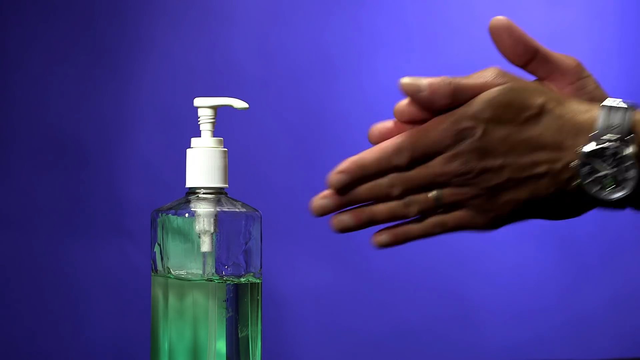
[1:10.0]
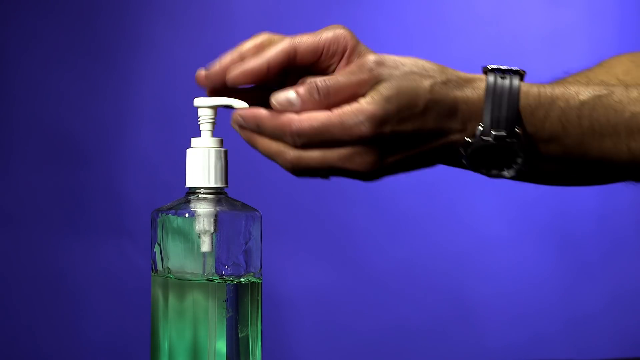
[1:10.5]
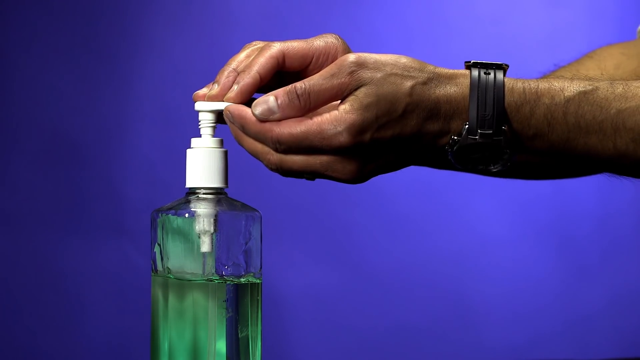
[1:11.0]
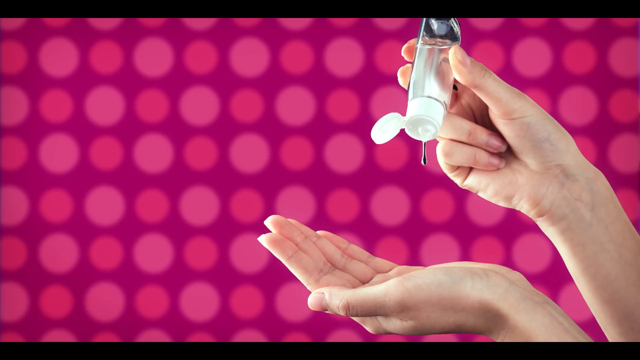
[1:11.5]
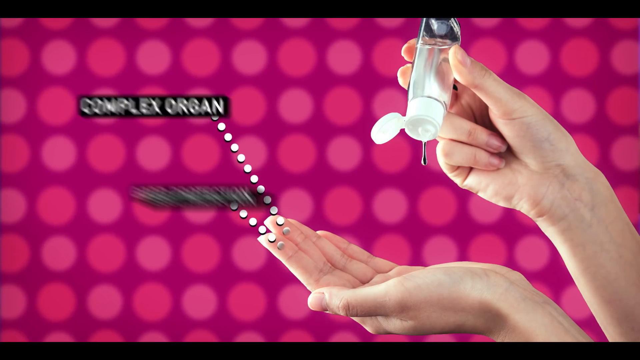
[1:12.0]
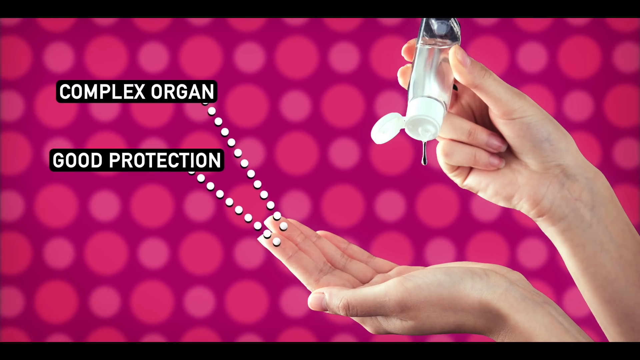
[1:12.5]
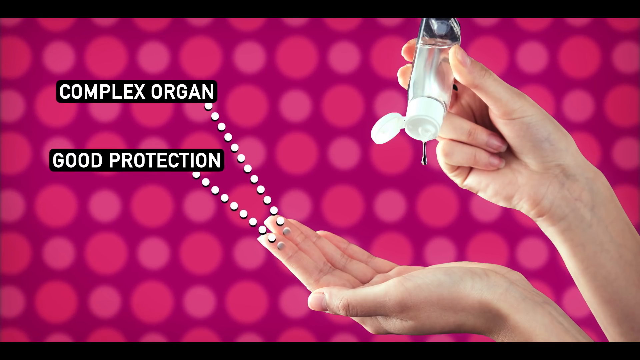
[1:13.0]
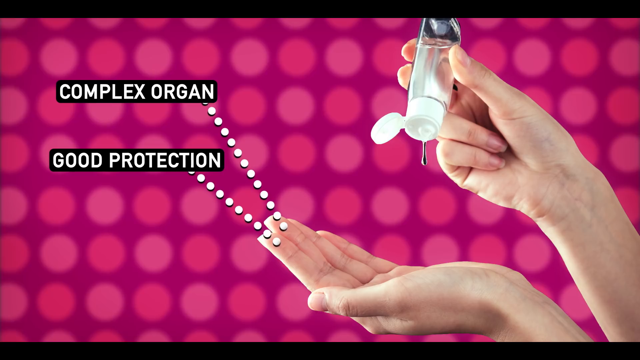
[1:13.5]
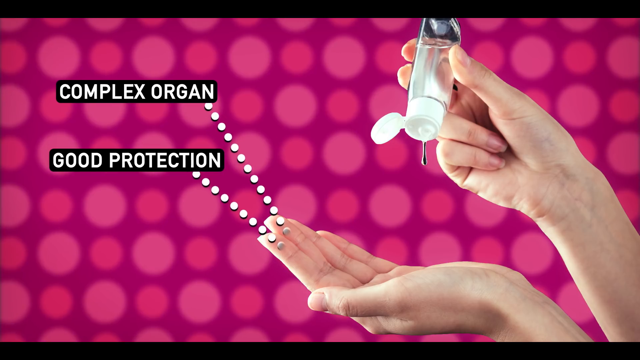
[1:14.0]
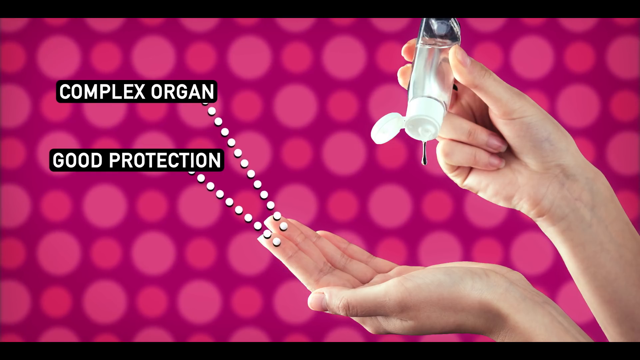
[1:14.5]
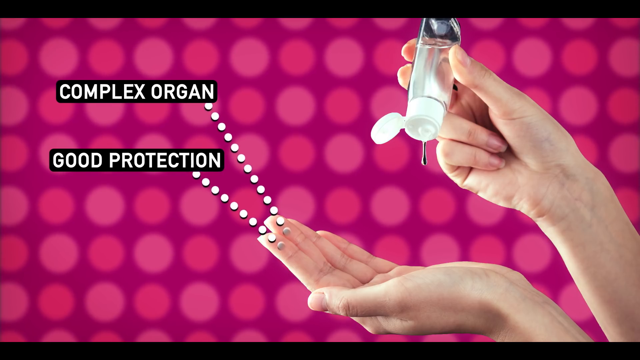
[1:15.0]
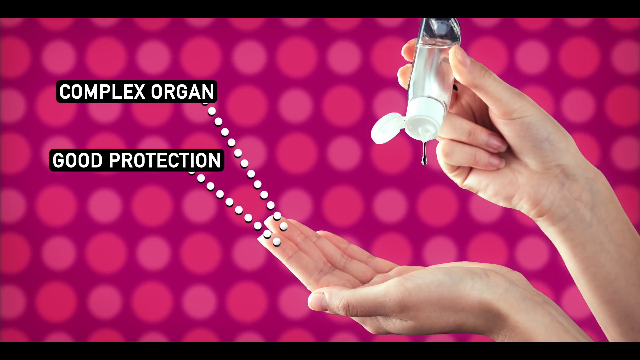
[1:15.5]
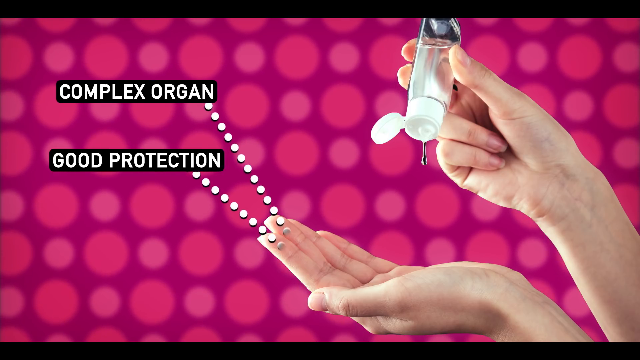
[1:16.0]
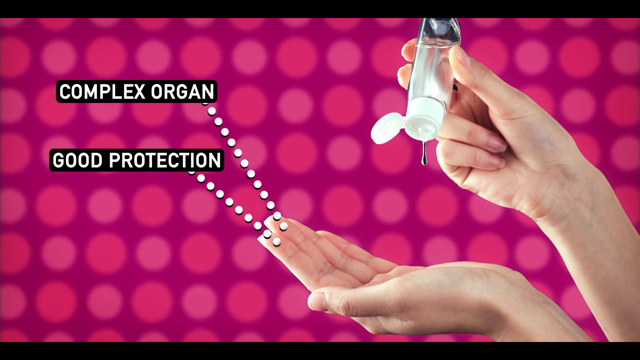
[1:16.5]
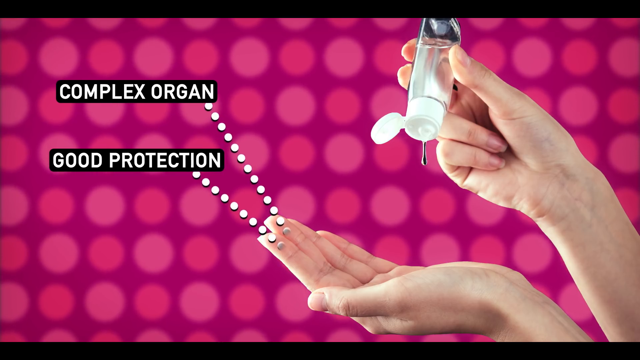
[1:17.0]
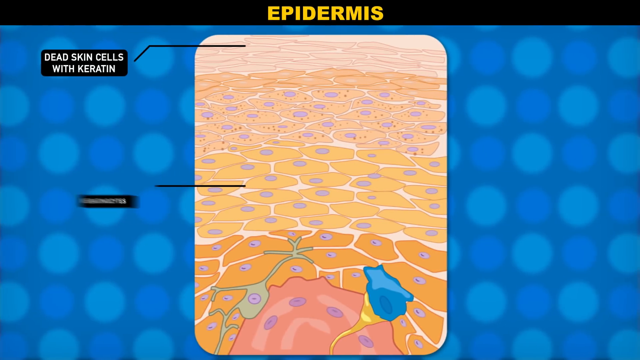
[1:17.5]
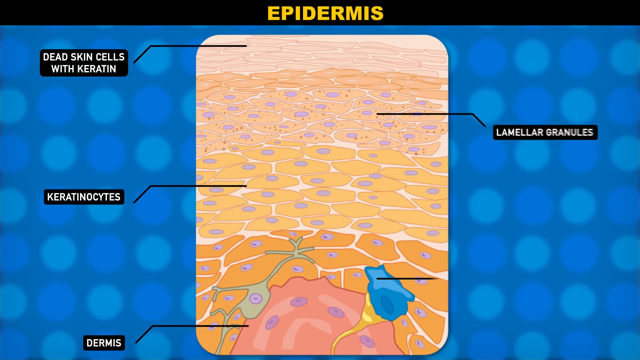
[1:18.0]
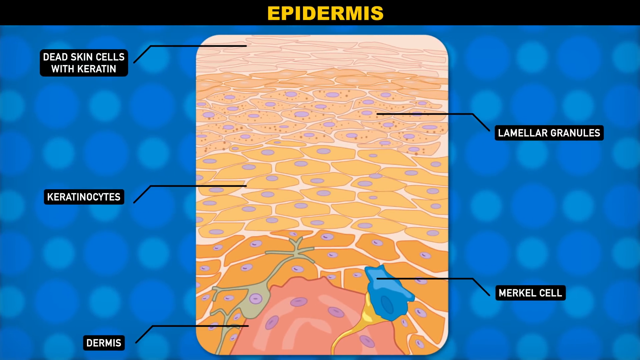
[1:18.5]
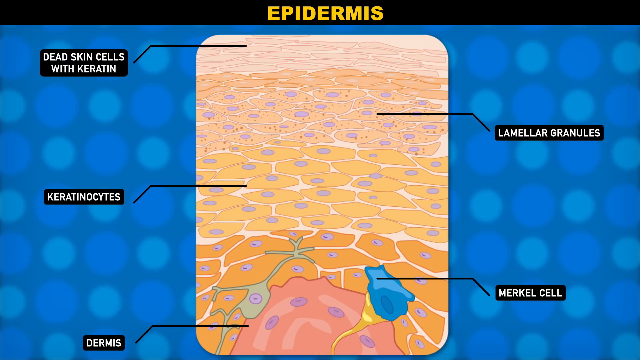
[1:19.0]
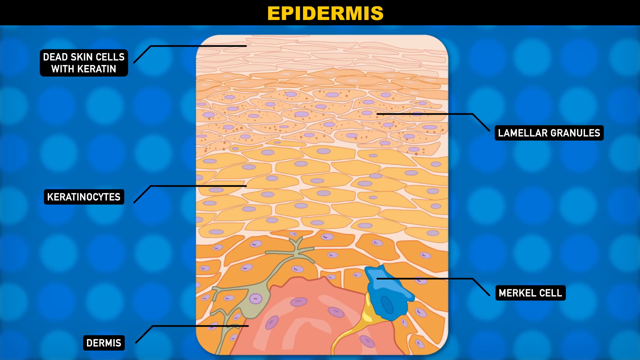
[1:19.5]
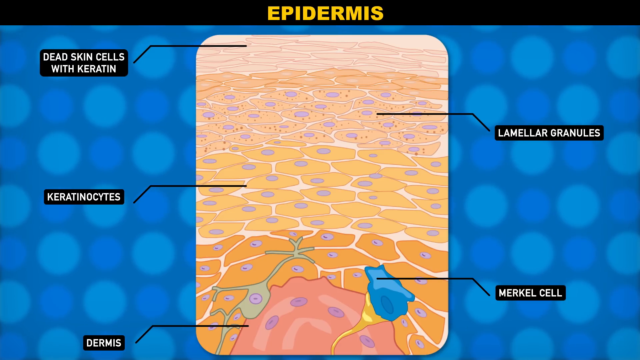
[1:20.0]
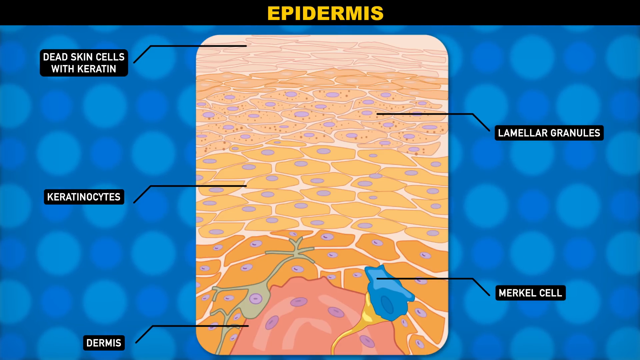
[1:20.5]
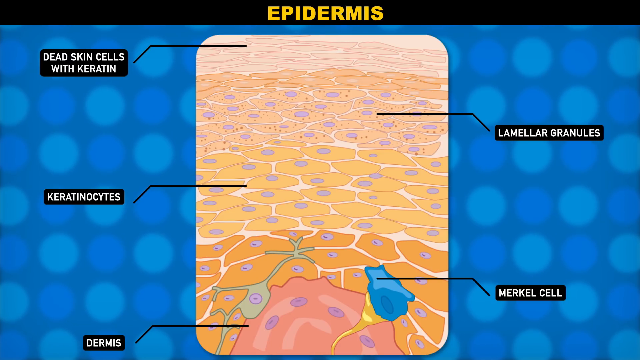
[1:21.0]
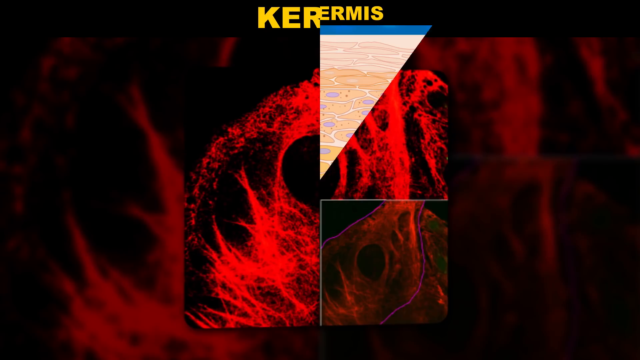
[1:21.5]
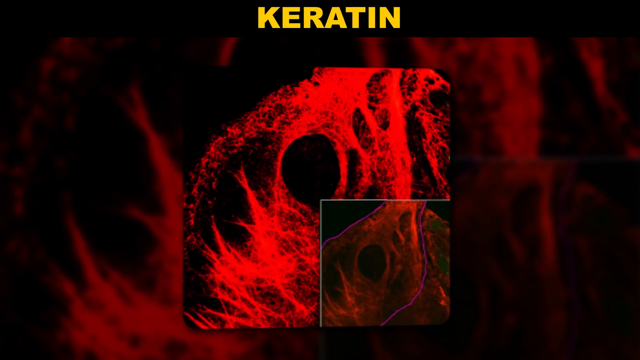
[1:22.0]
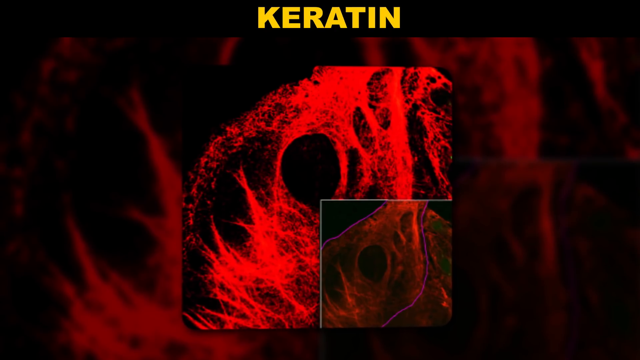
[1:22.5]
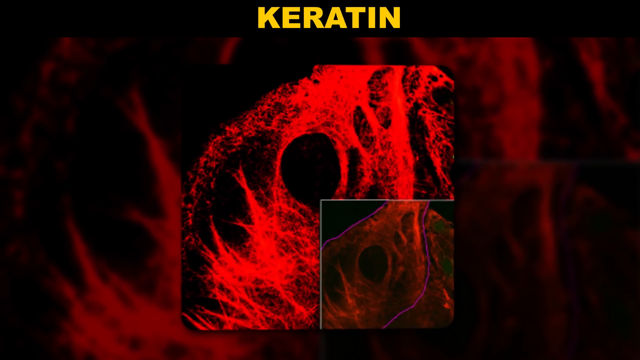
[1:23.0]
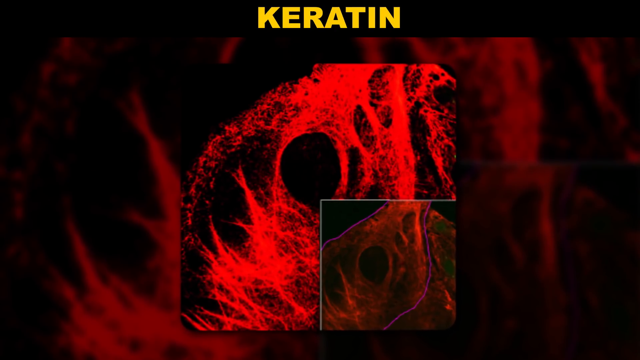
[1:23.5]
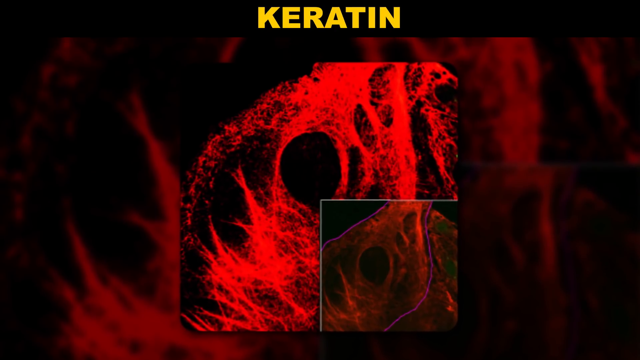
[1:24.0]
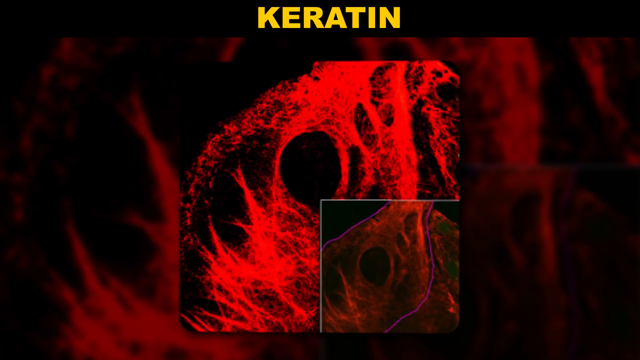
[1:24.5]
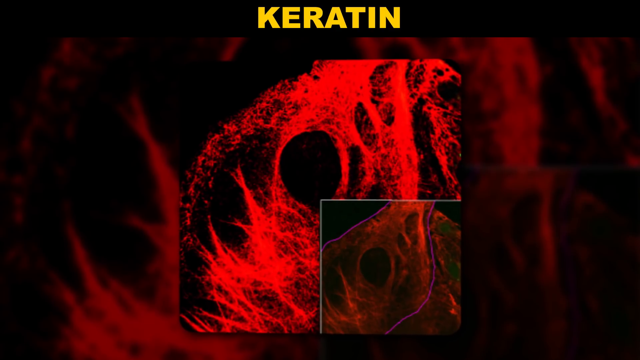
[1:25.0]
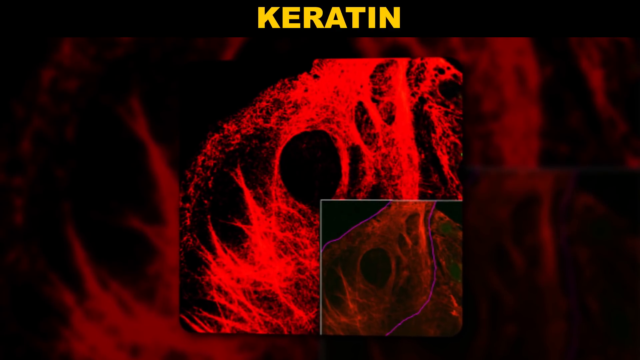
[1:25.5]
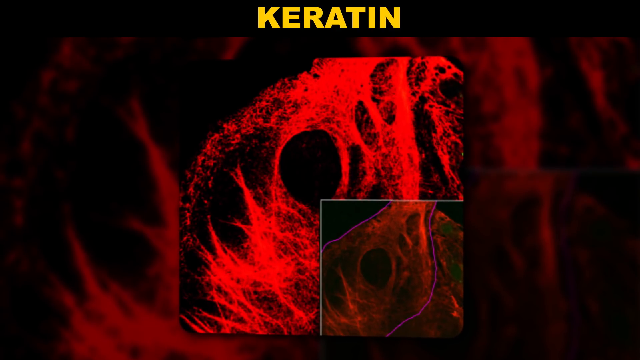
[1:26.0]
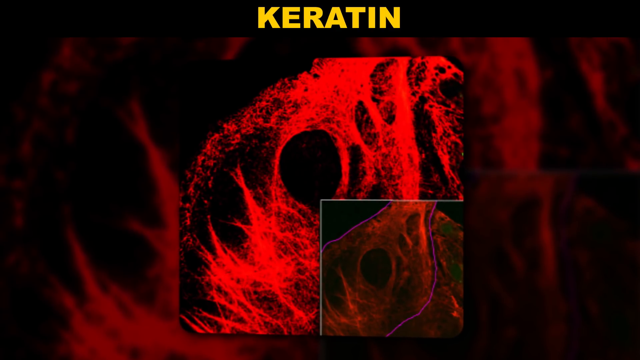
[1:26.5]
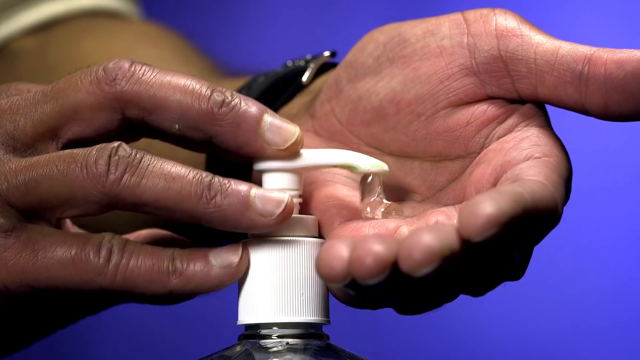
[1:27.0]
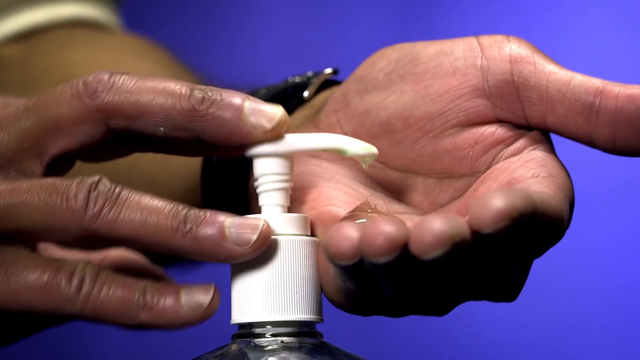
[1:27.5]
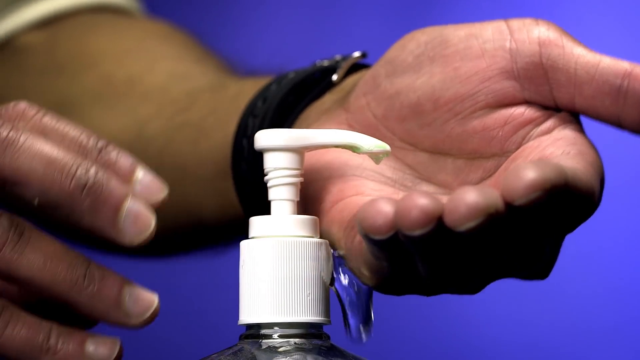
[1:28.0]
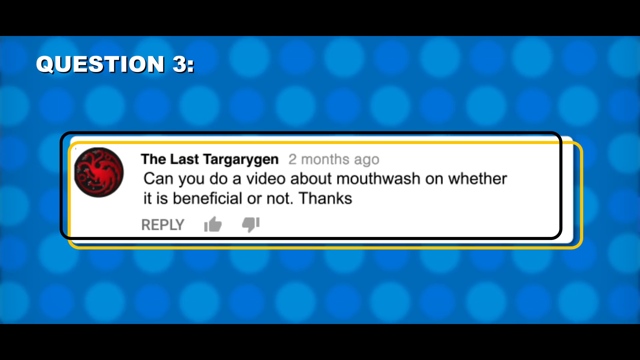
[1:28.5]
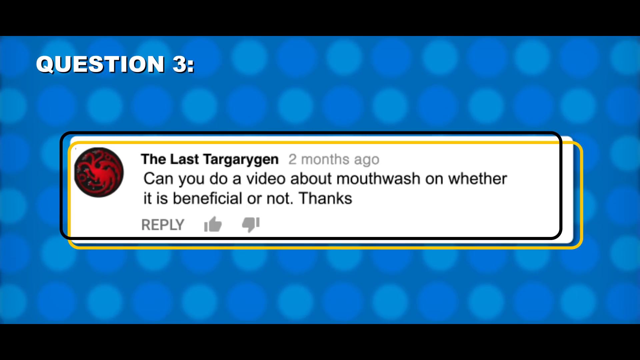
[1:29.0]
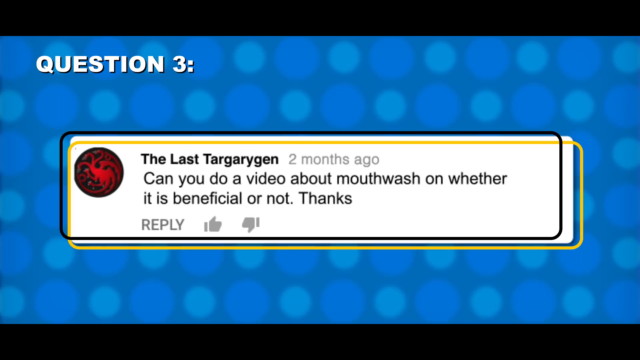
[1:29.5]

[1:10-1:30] After rubbing it in, the man gets some more sanitizer. The screen changes to a pink background with lighter pink and darker pink circles and rows. A hand is shown with the left hand palm up and the right hand squeezing some clear sanitizer onto it, with labels coming from the hand that say "complex organ" and "good protection". The screen changes again to "epidermis" at the top and a close-up view of skin. Captions label the different layers of the skin: "dead skin cells with keratin" at the top, then "lamellar granules", then "keratinocytes", and "Merkel cell" at the bottom. Next comes a very close-up, highly magnified view of keratin, followed by another close-up of someone putting sanitizer onto their left hand. The screen then changes to show "Question number 3".